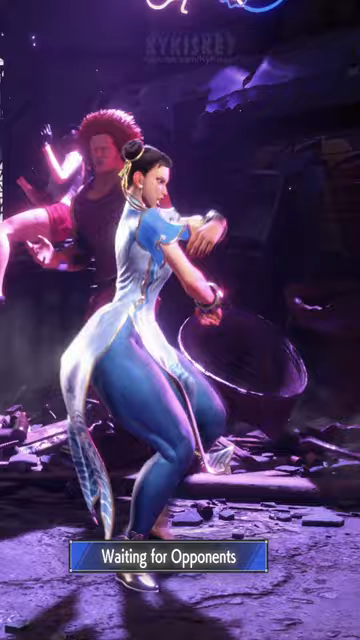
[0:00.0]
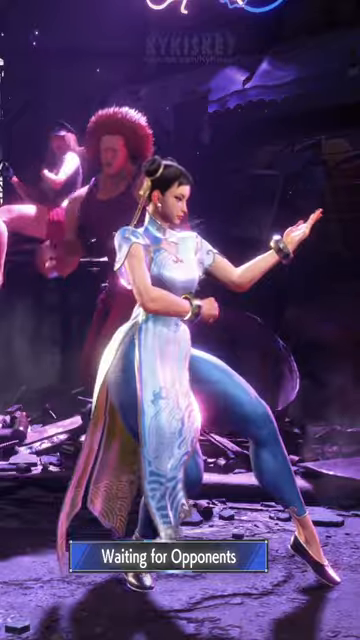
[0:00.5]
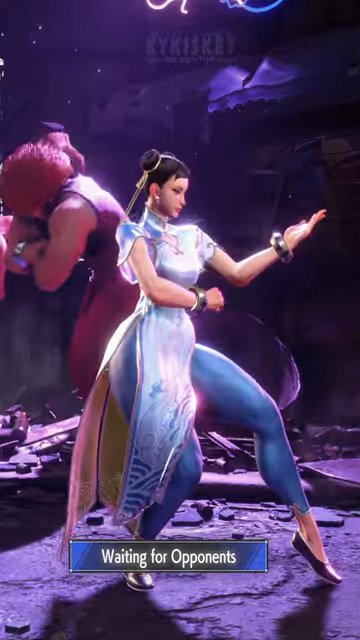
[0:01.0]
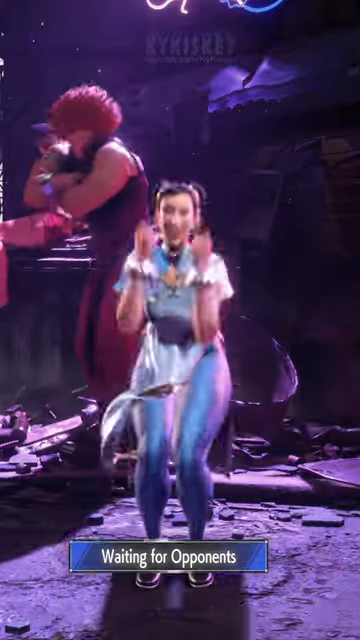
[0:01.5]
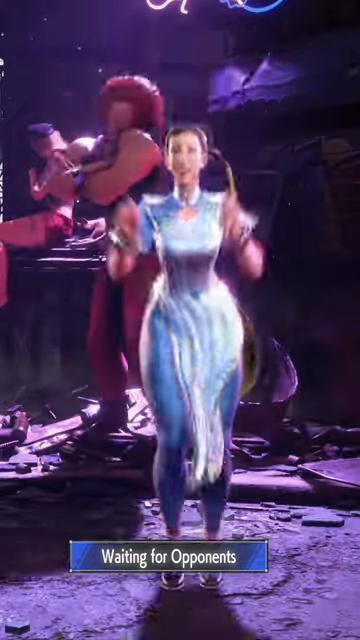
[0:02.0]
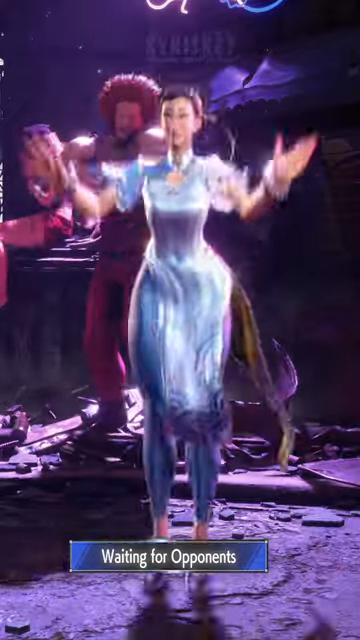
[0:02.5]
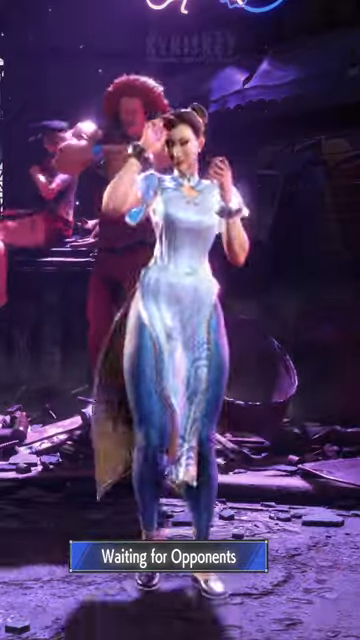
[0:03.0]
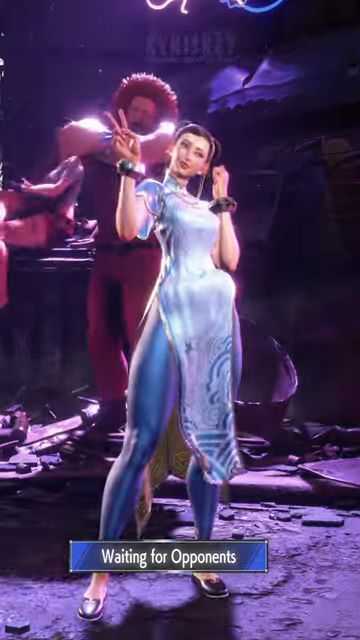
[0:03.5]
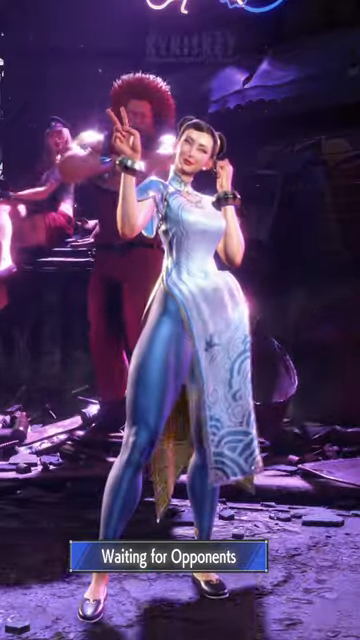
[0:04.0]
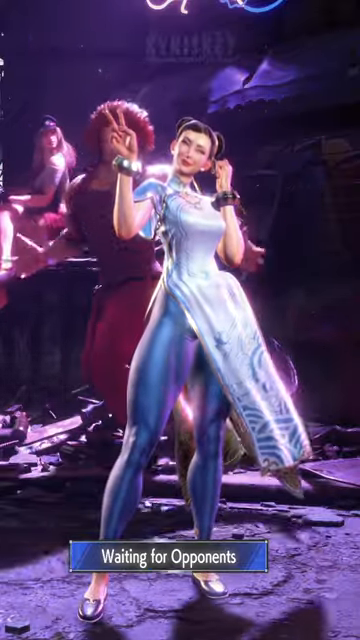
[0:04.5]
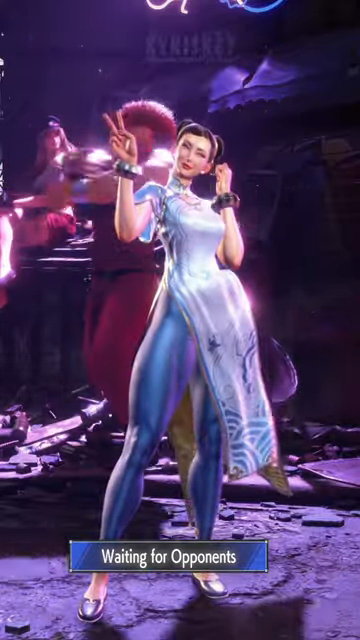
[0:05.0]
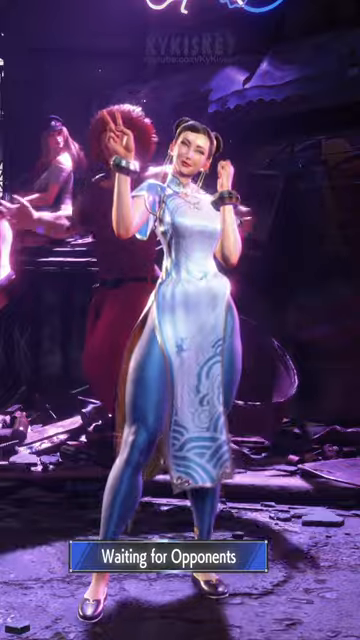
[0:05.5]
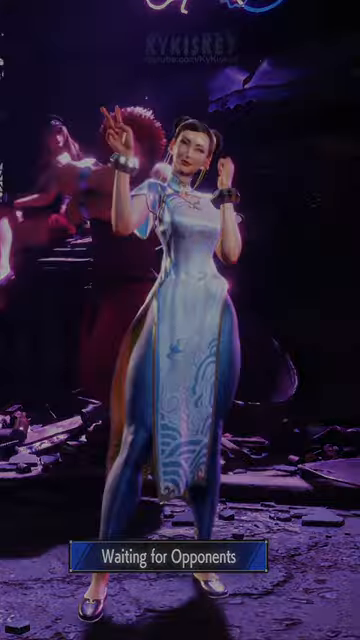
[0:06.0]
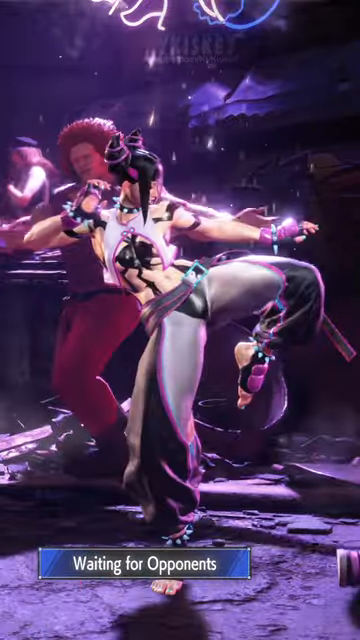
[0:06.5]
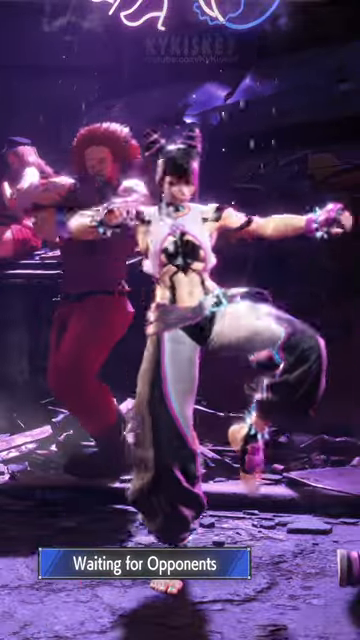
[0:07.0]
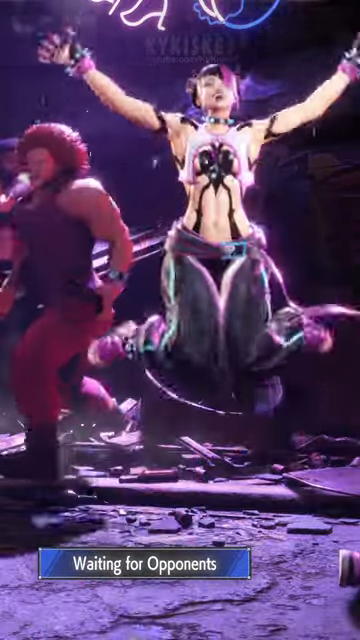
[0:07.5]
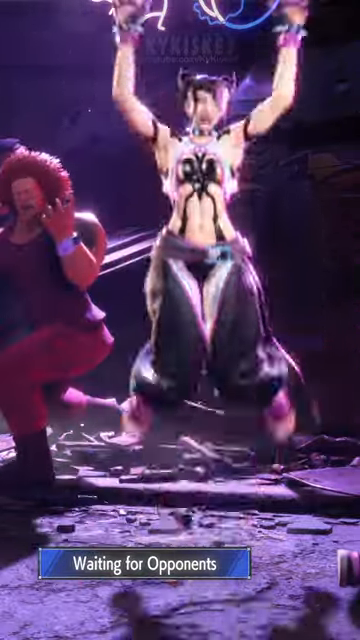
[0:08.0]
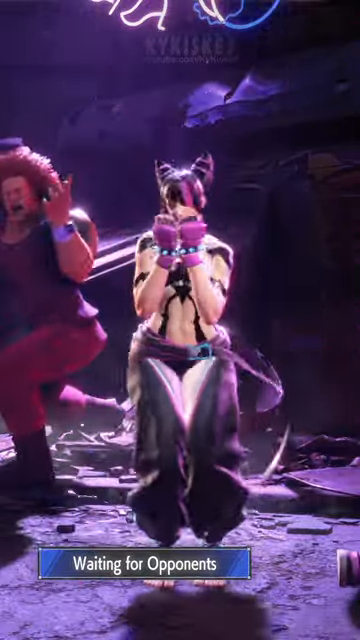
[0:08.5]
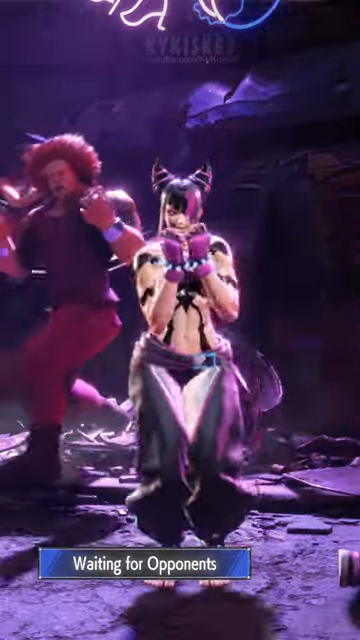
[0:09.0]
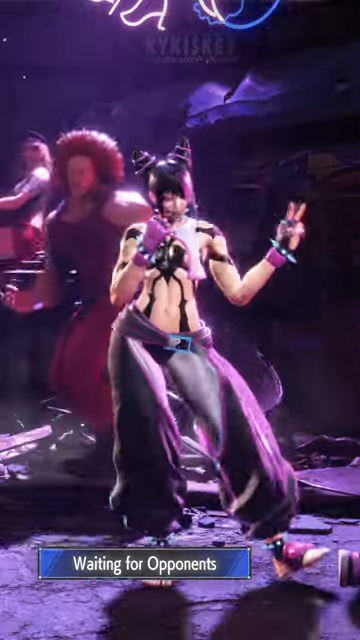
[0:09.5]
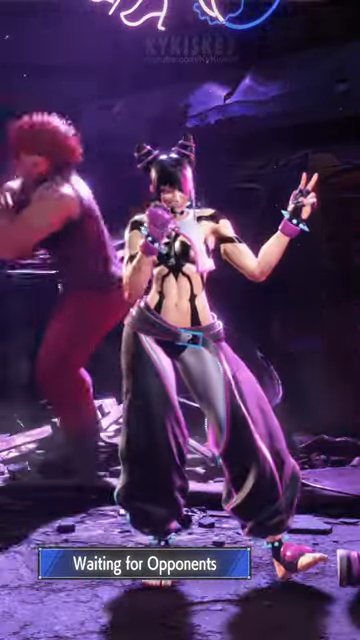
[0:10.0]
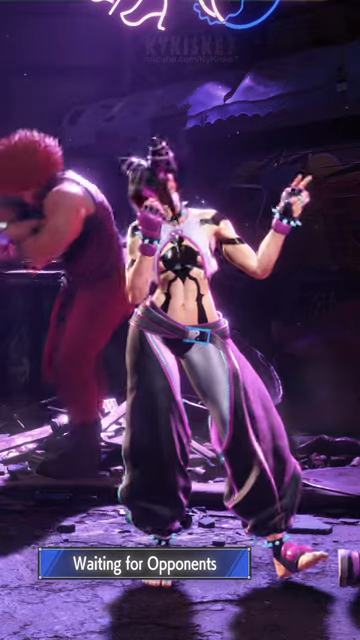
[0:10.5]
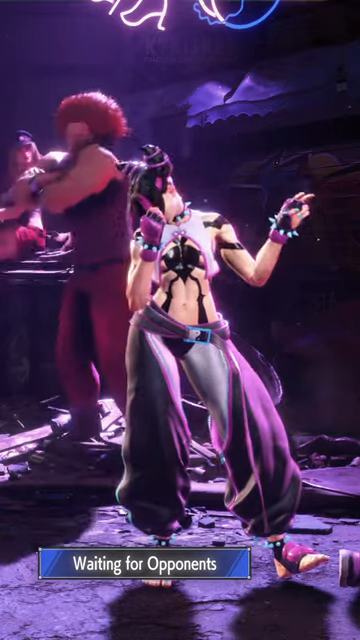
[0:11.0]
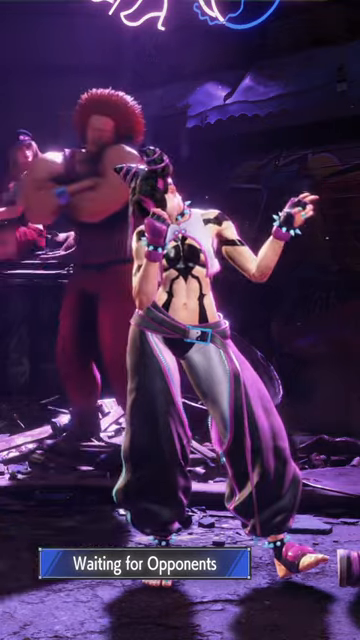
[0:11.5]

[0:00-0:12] In what appears to be Street Fighter, Chongli strikes a very Chinese karate battle-style pose. Two characters are behind her, one of them with a big head. Text at the bottom reads "waiting for opponents." Chongli then suddenly jumps up, celebrating something, and makes a peace sign. She wears blue tights and something light blue in a Japanese style with waves on it. Next is a character who is possibly Juri rather than Chongli; she does the same thing Chongli does. She is dressed like a demon, with black pants, a yin yang on her belt, and some kind of horns. She also makes a peace sign, somewhat mockingly.